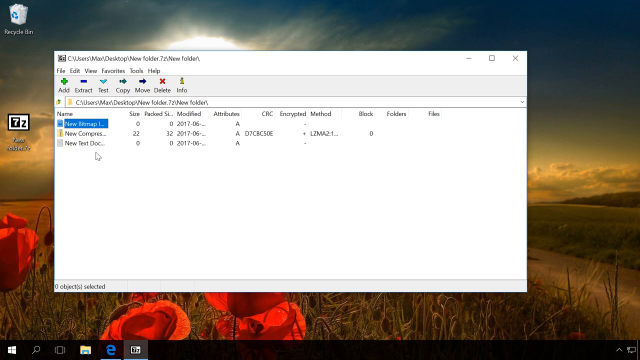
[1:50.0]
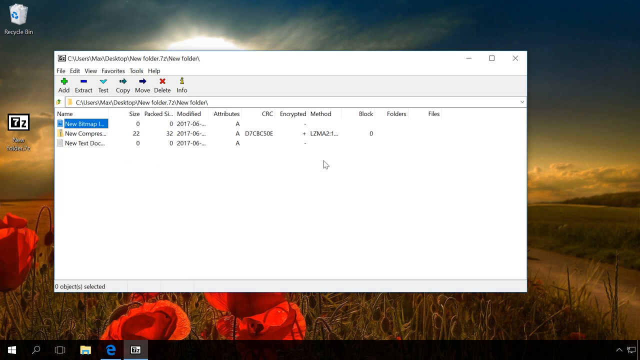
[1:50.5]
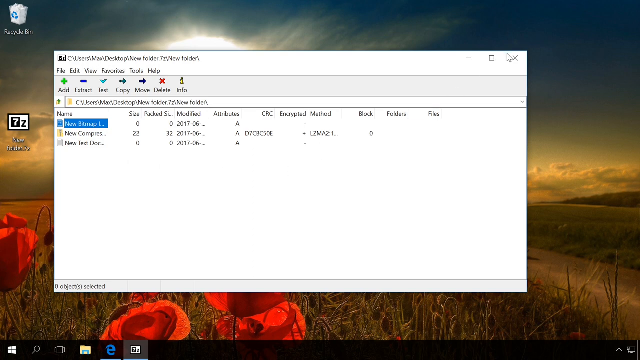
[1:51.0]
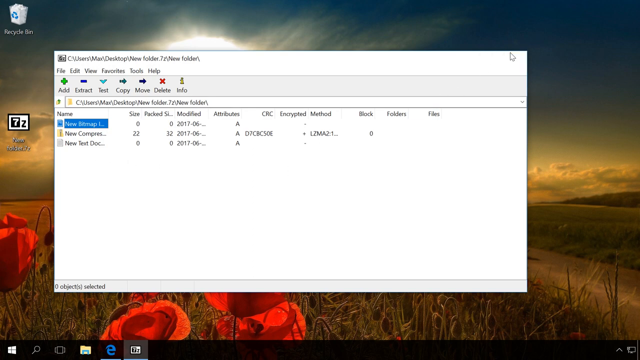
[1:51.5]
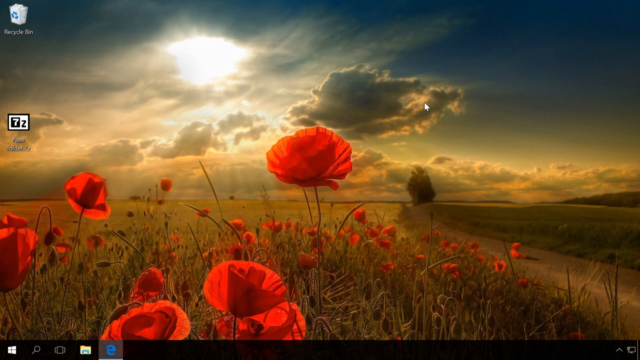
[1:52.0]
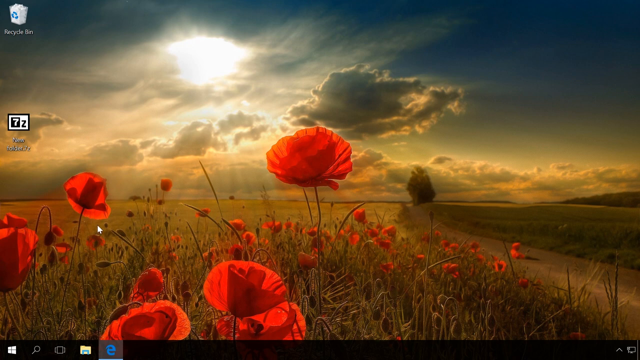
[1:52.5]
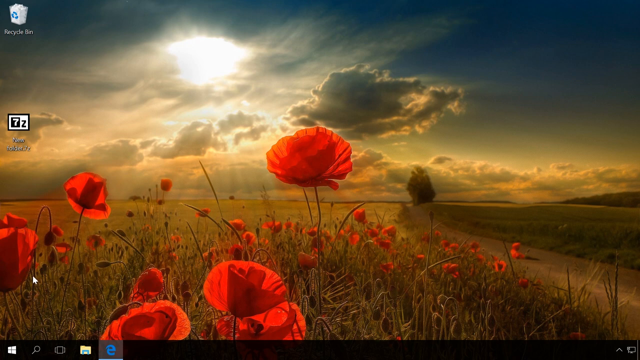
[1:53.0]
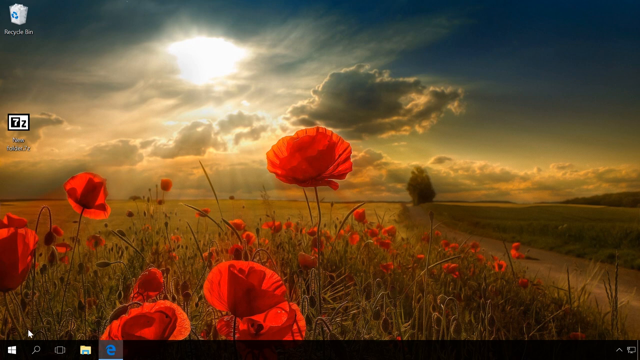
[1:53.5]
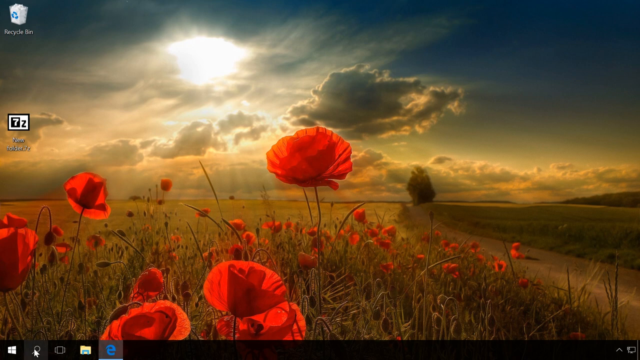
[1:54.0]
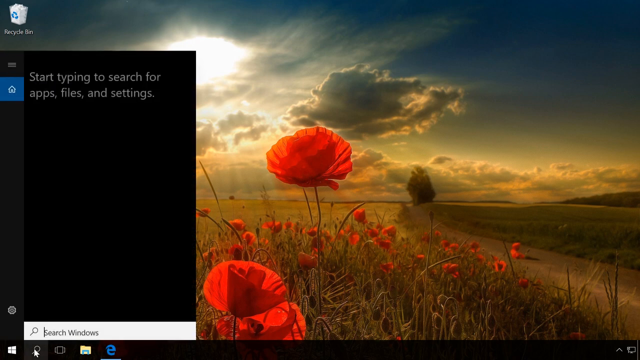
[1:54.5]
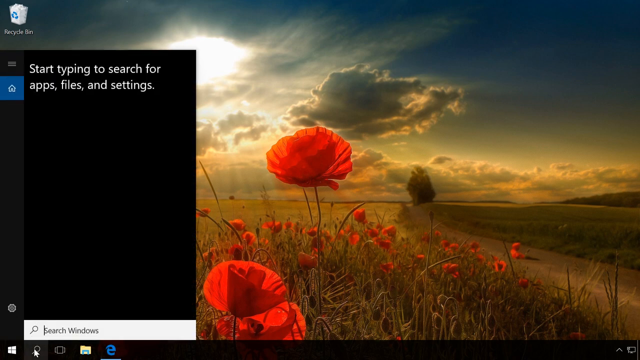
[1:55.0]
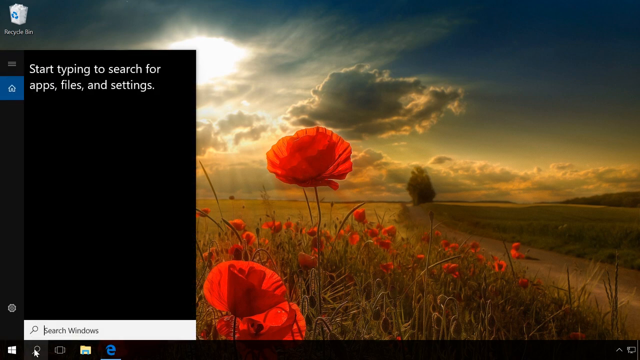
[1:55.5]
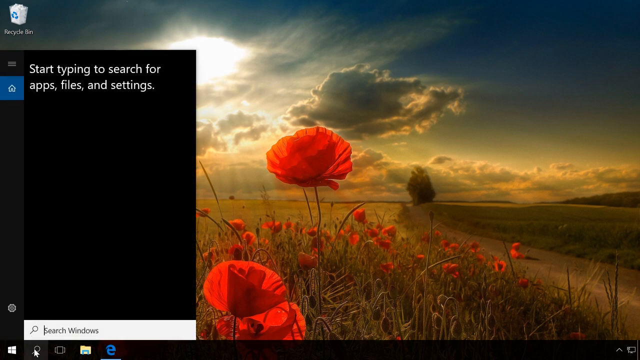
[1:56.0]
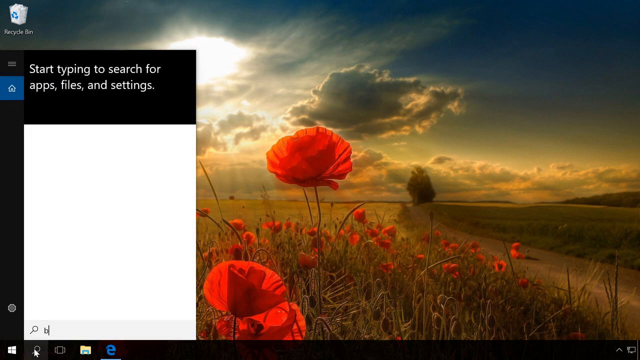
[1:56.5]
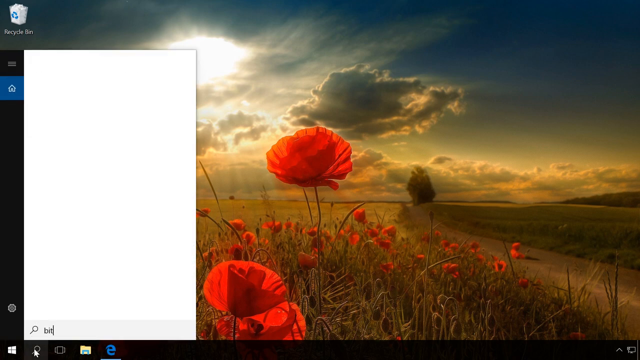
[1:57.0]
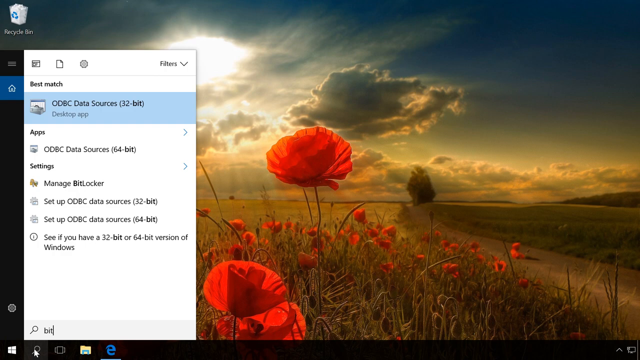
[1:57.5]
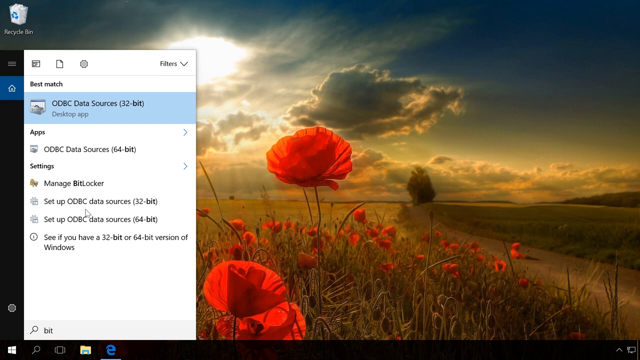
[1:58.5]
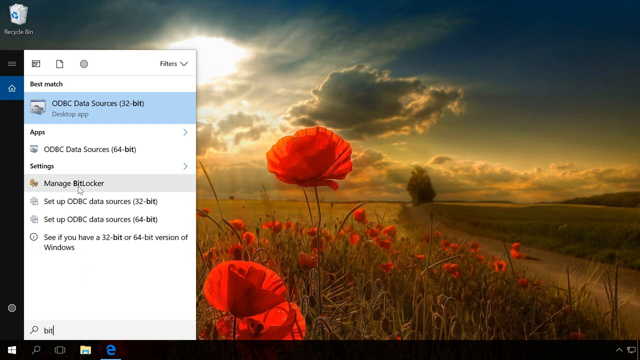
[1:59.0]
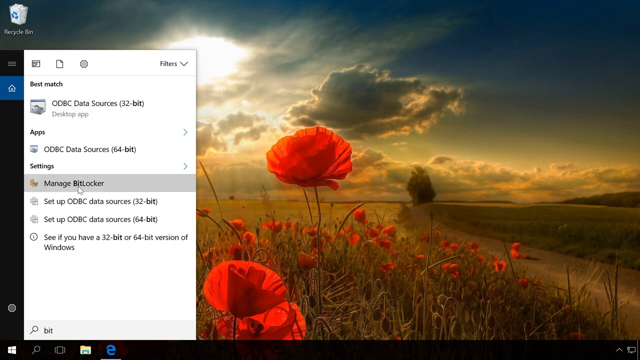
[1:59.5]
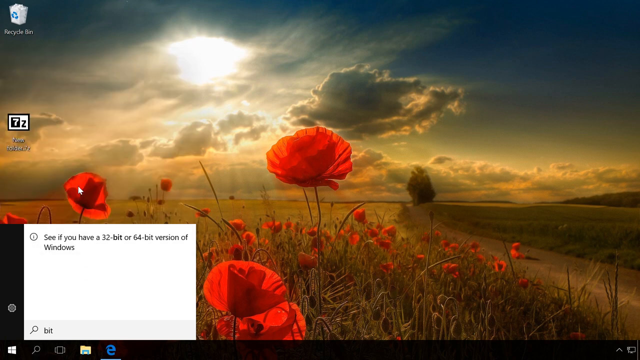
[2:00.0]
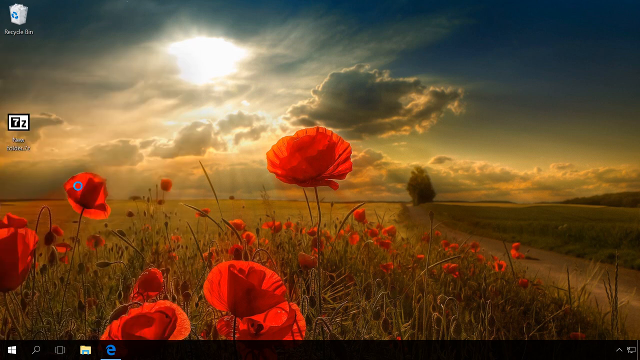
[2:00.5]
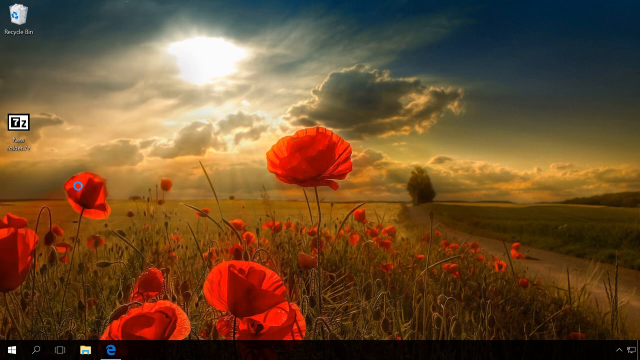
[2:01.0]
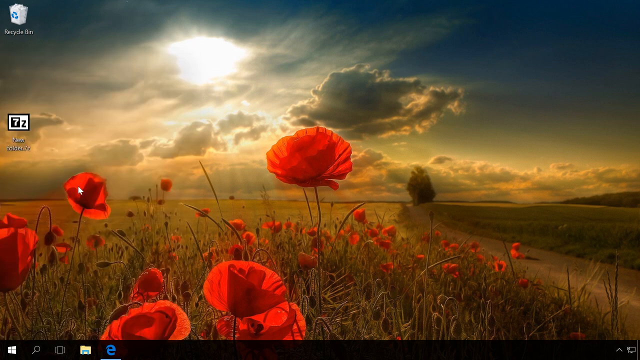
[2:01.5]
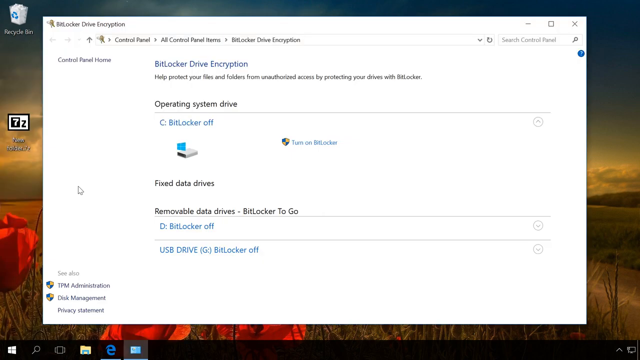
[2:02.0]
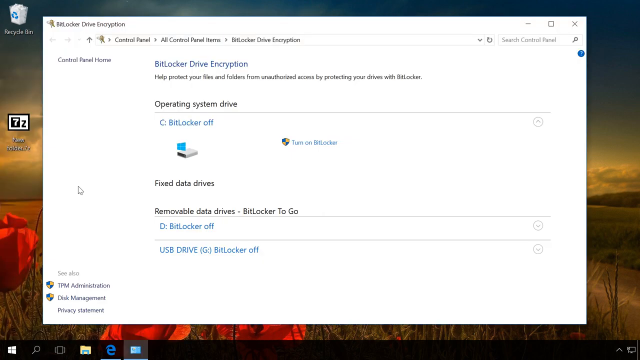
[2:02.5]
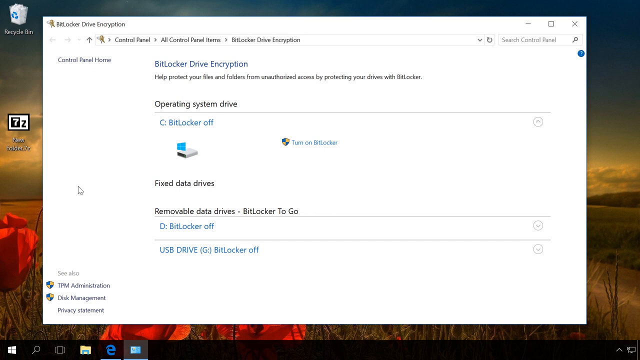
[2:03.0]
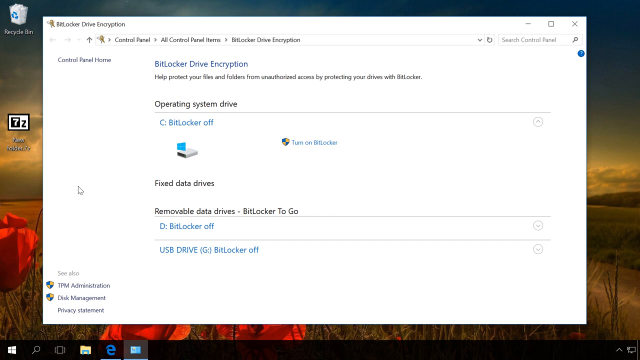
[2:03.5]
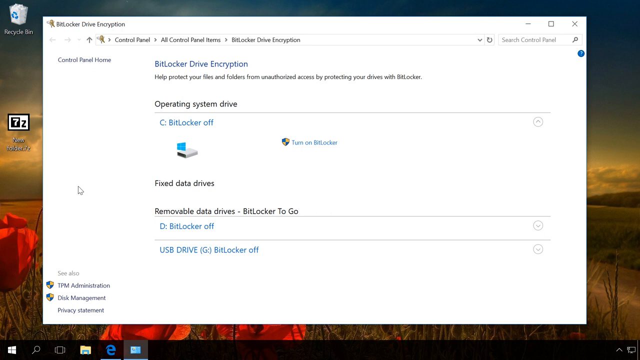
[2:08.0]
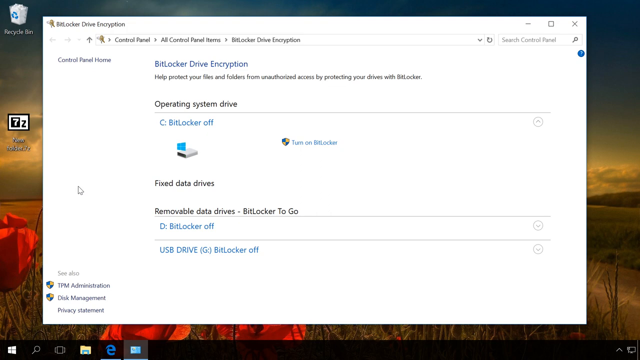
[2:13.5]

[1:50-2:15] The cursor moves over and arcs upward to the top corner, where it clicks the X to close the window. It then returns to the bottom left of the screen and brings up a search panel with a black background. At the top left are two short horizontal lines, below which is a blue square with a house symbol. To the right is the text "start typing to search for apps, files and settings". Toward the bottom left is a settings symbol, and below and to the right of it is a search icon and the text "search windows" in a white horizontal box. The cursor moves there and types "bit", which brings up various options. Under "best match" at the top is a blue horizontal bar across the box, which covers about a quarter of the total screen, containing an unidentified icon and the text "ODBC data sources (32-bit)", with "desktop app" below in faint gray text on a light blue background. Below are other options, one under apps and four under settings. The cursor moves to one under settings, "manage bit locker", and clicks it, opening another window that covers much of the screen. In the top corner is a symbol that might be keys and the words "bit locker drive encryption"; at the other end are the minimize and maximize buttons and an X to close. The address bar shows the keys symbol followed by "control panel > all control panel items > bit locker drive encryption".